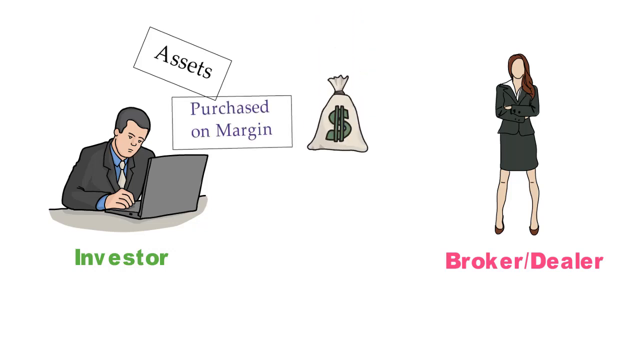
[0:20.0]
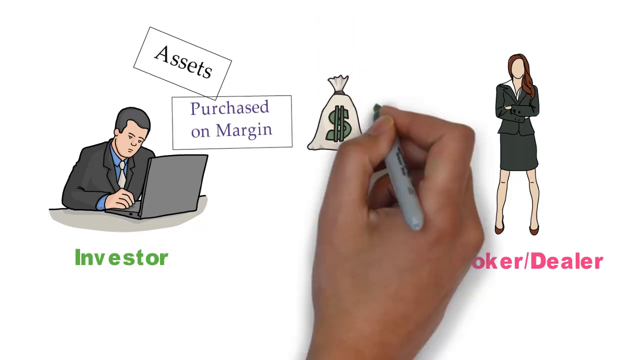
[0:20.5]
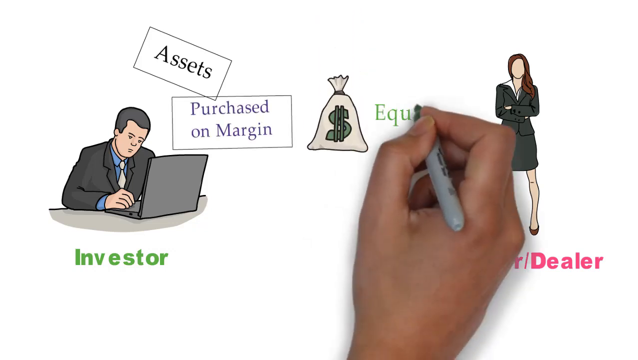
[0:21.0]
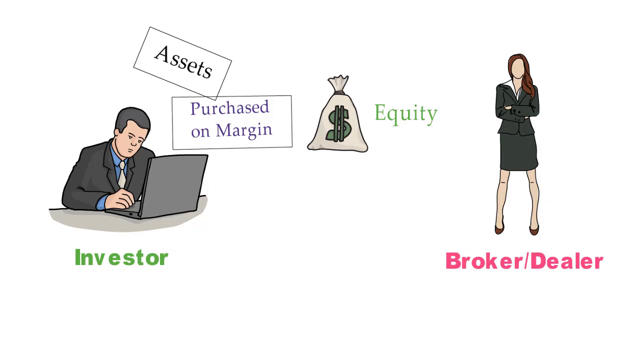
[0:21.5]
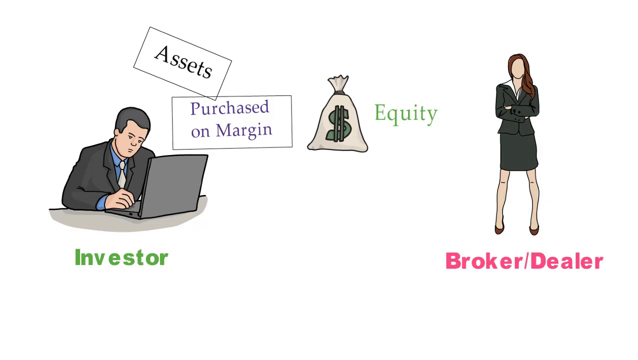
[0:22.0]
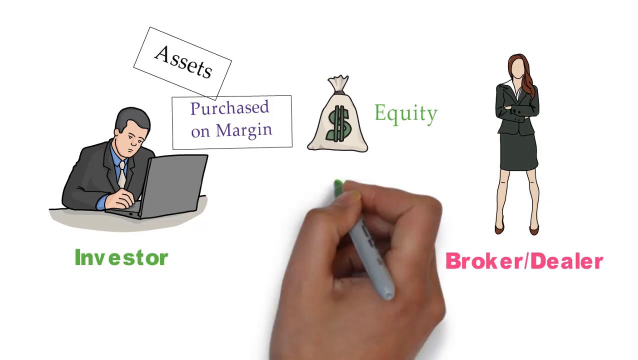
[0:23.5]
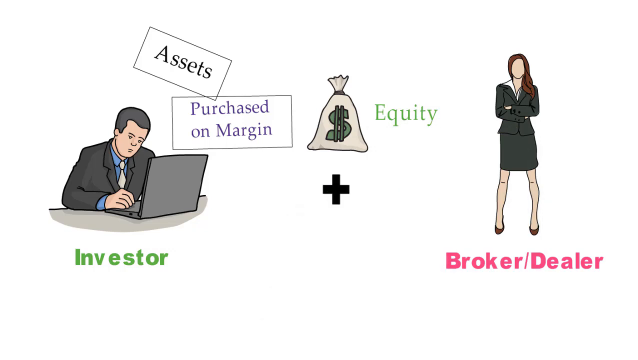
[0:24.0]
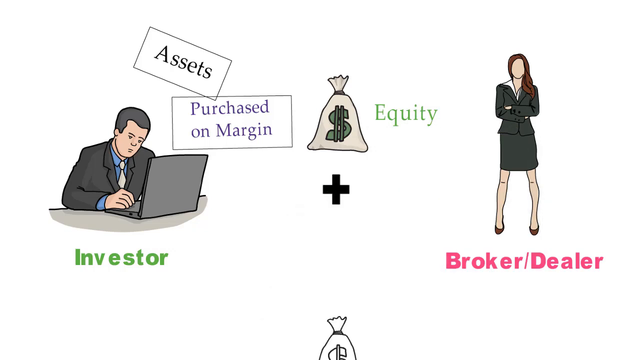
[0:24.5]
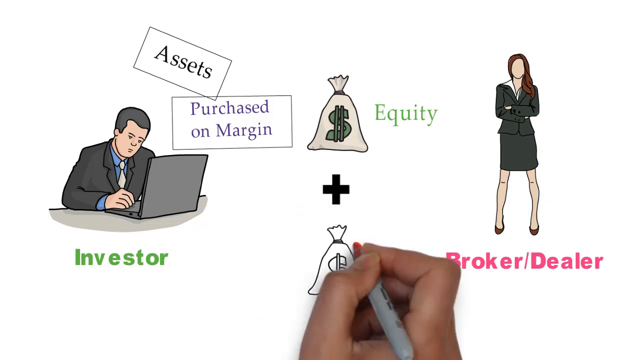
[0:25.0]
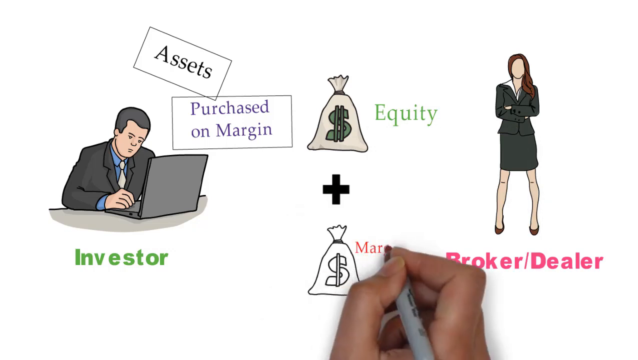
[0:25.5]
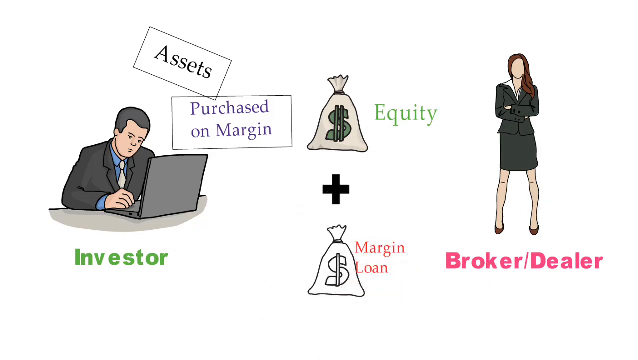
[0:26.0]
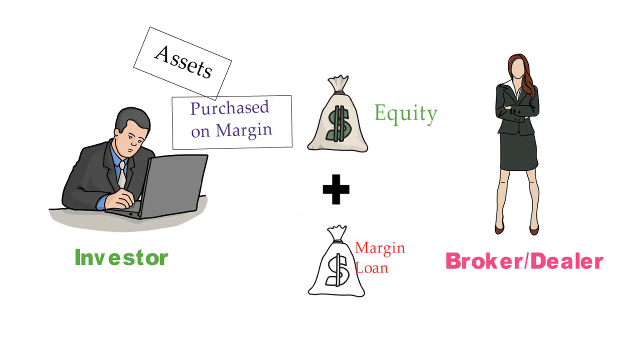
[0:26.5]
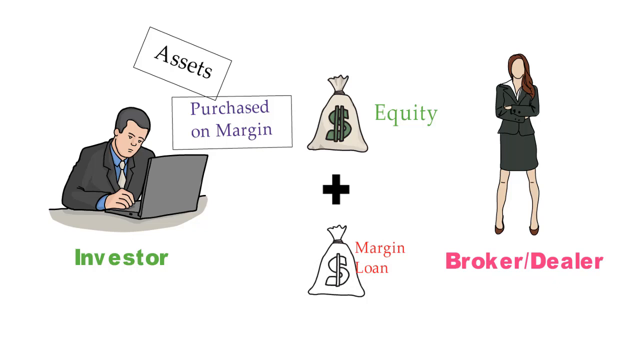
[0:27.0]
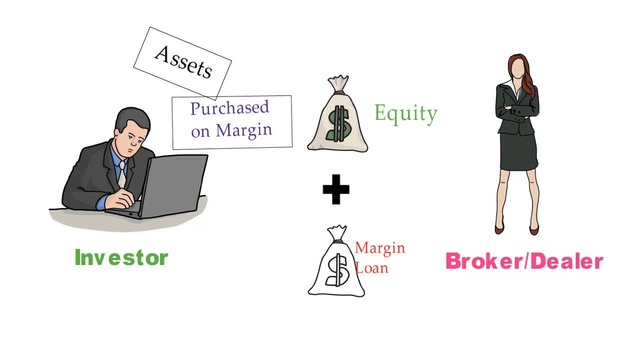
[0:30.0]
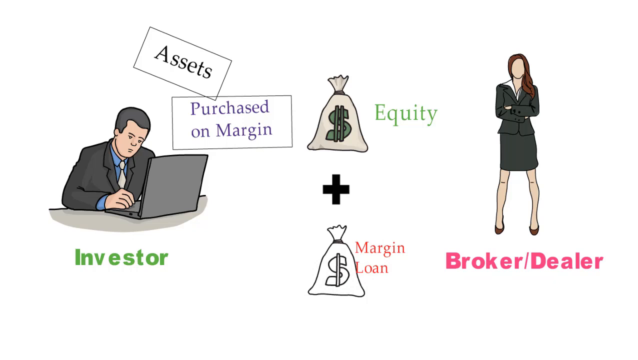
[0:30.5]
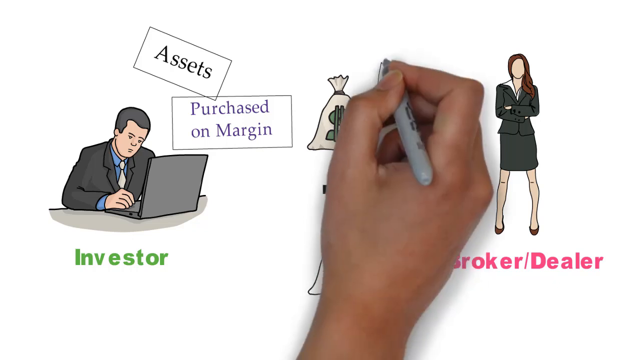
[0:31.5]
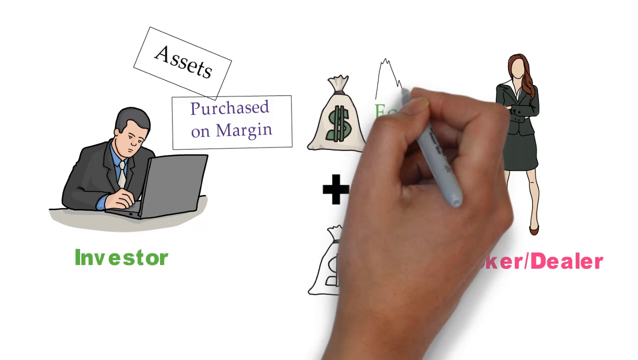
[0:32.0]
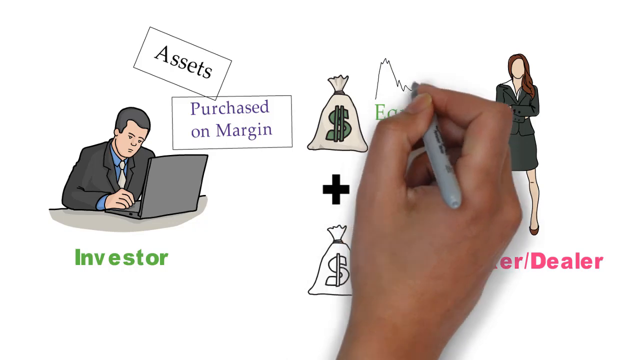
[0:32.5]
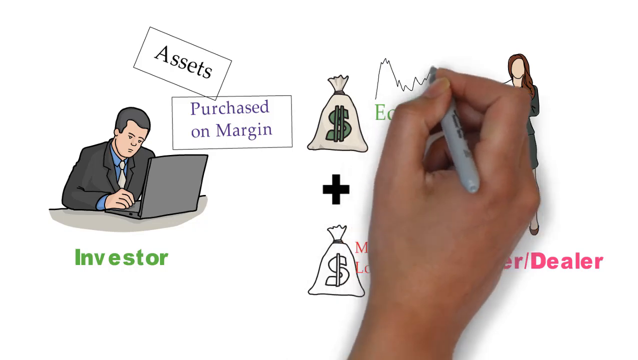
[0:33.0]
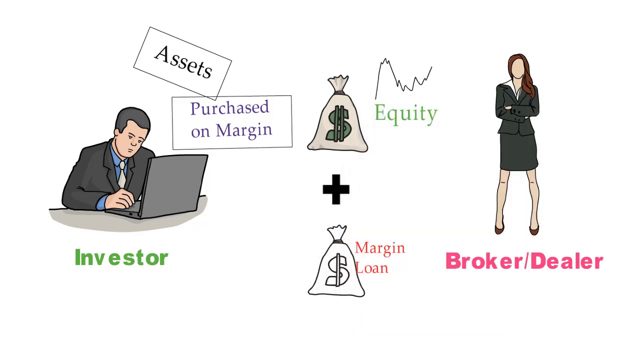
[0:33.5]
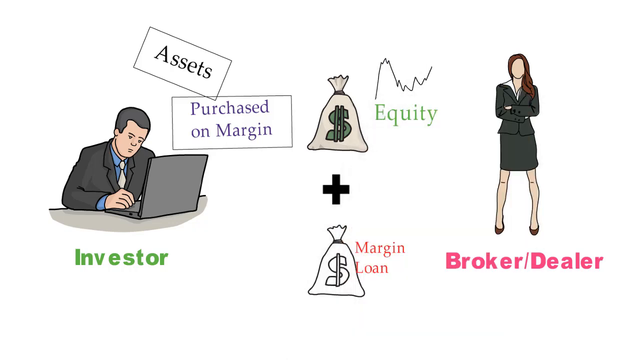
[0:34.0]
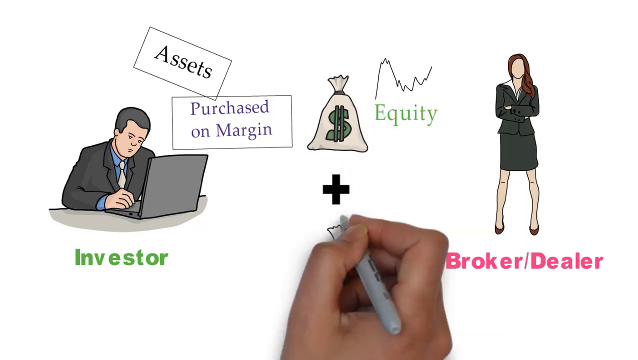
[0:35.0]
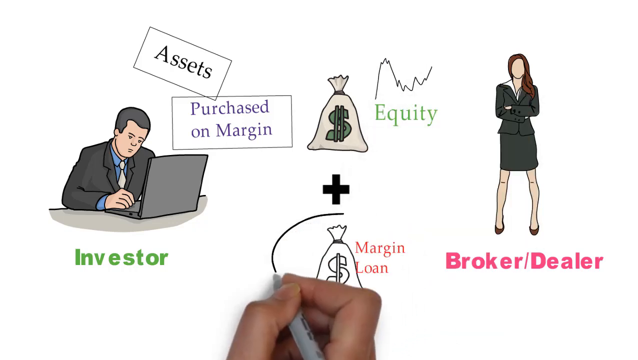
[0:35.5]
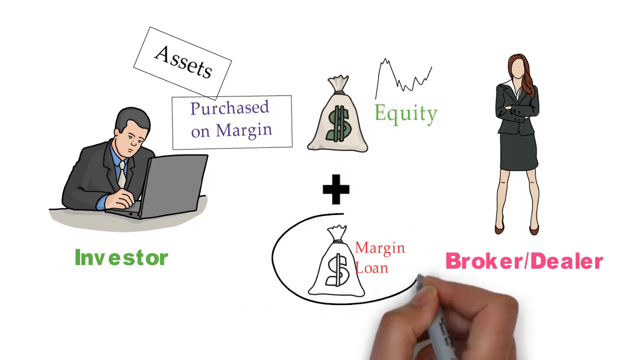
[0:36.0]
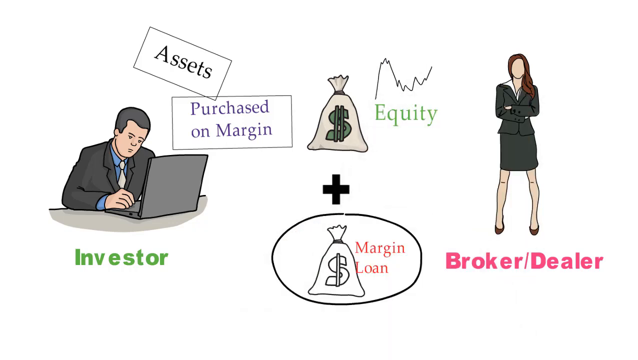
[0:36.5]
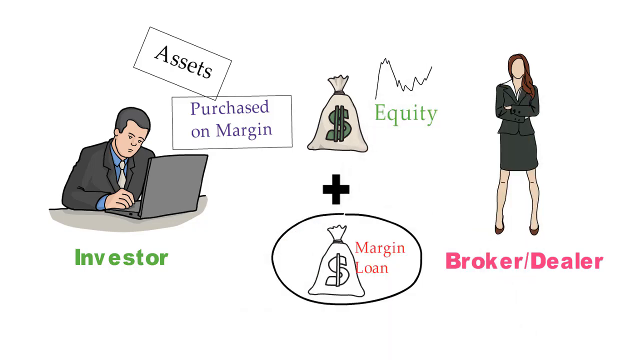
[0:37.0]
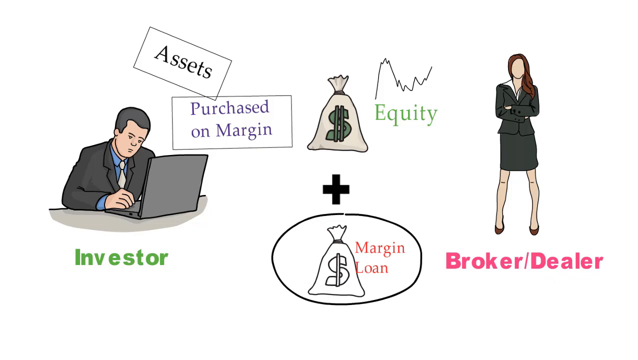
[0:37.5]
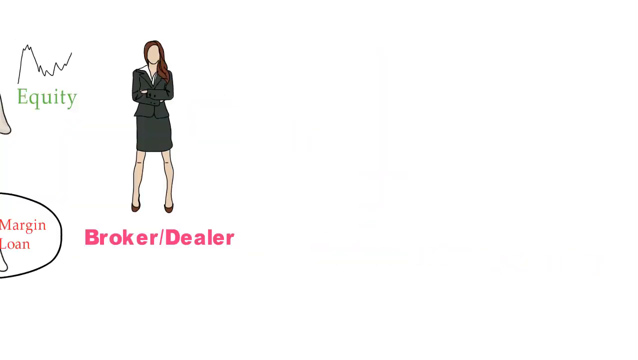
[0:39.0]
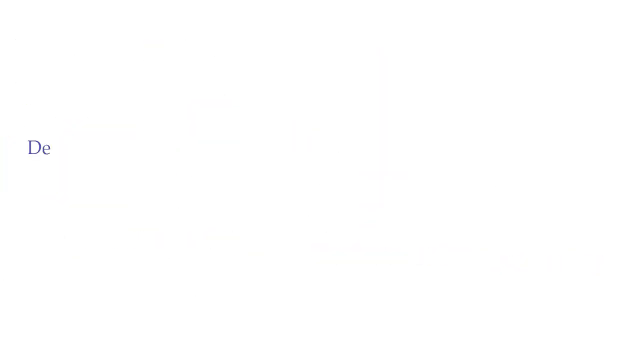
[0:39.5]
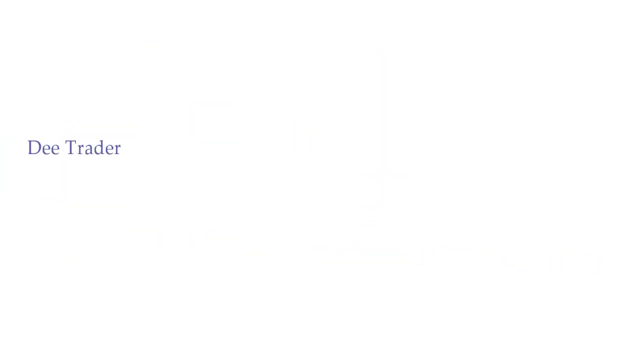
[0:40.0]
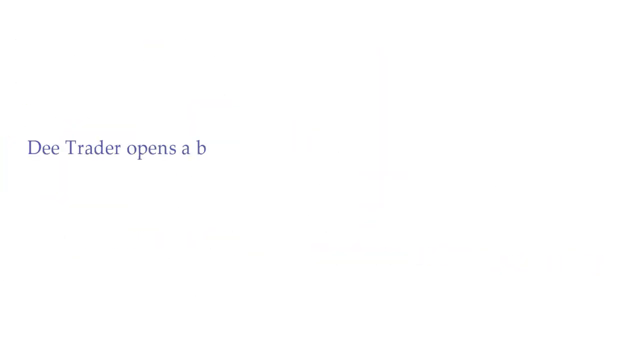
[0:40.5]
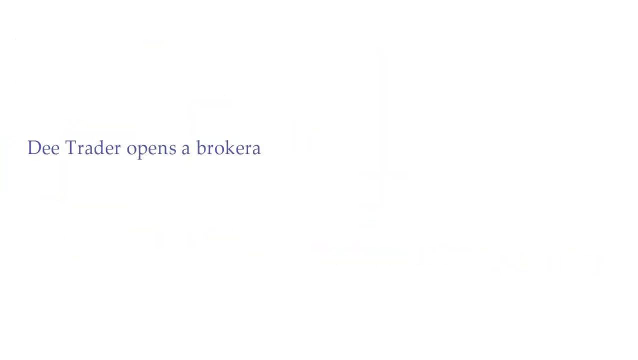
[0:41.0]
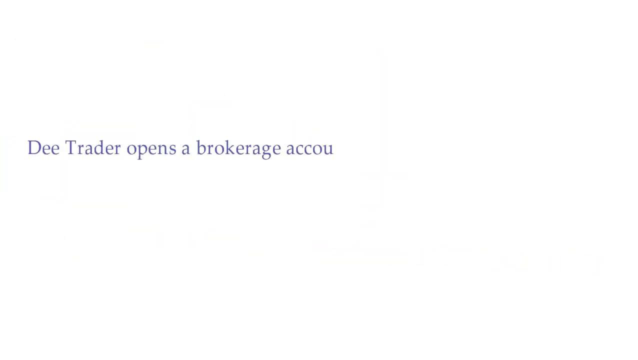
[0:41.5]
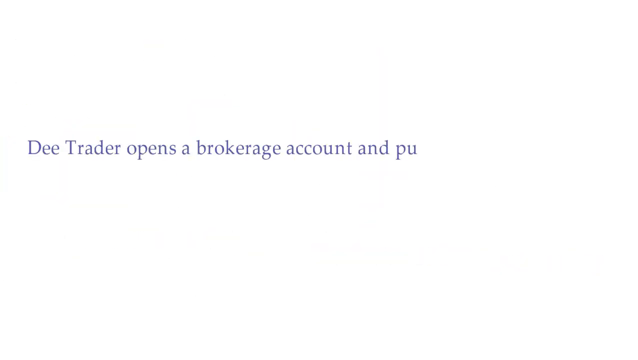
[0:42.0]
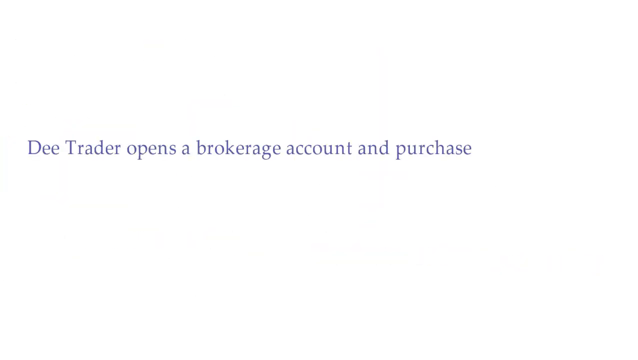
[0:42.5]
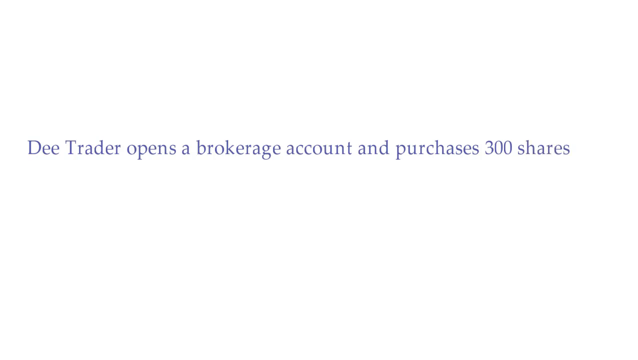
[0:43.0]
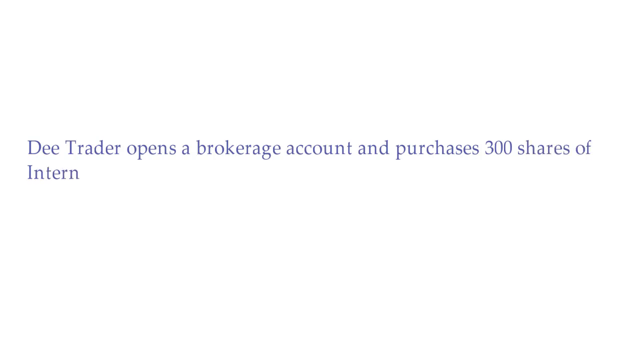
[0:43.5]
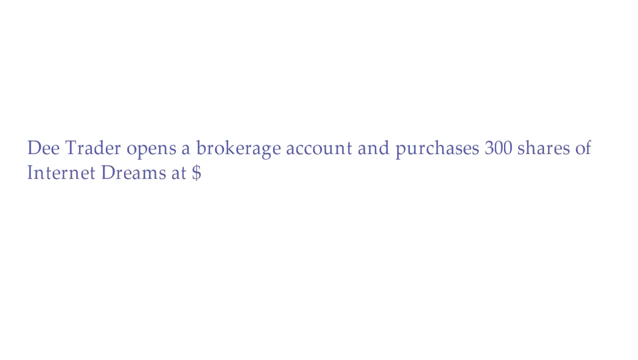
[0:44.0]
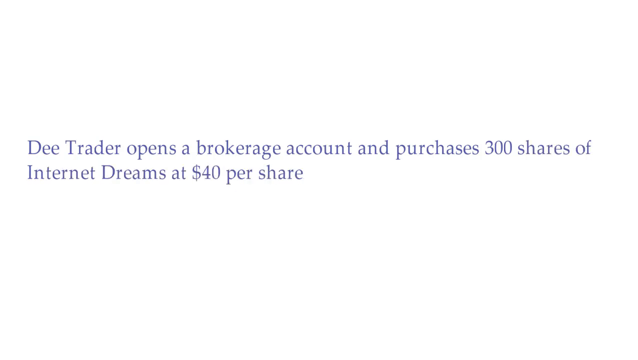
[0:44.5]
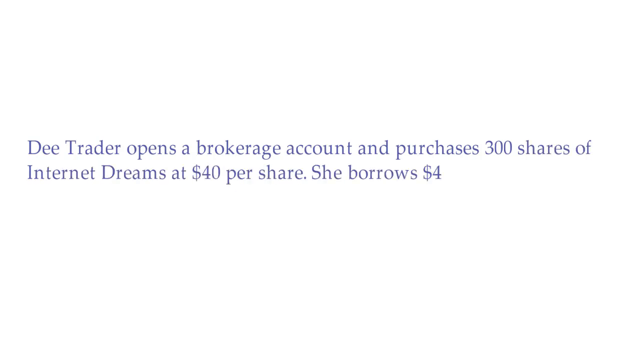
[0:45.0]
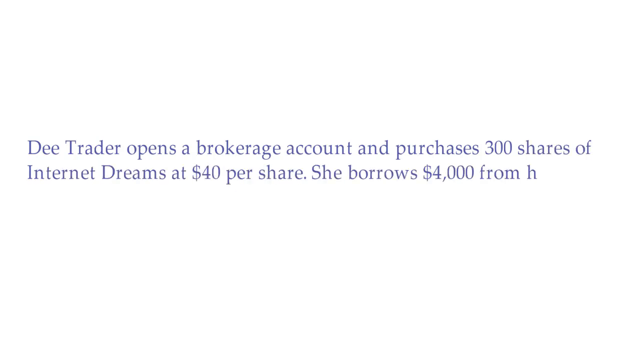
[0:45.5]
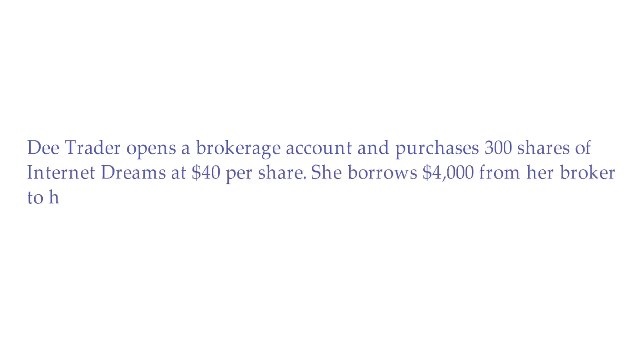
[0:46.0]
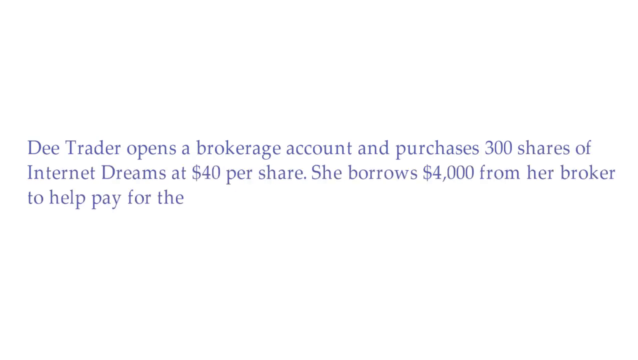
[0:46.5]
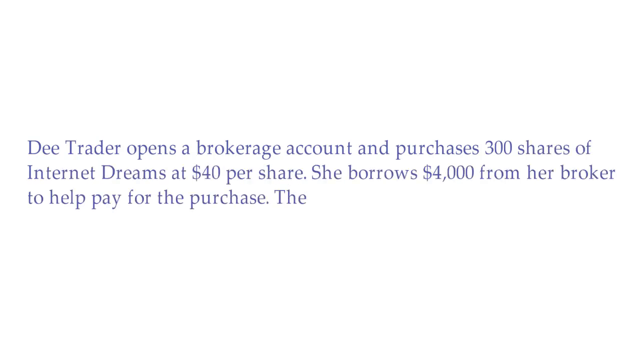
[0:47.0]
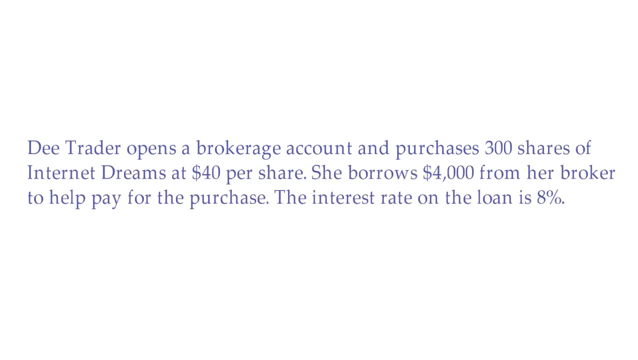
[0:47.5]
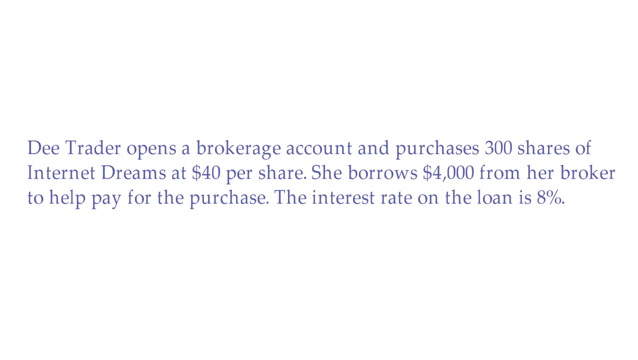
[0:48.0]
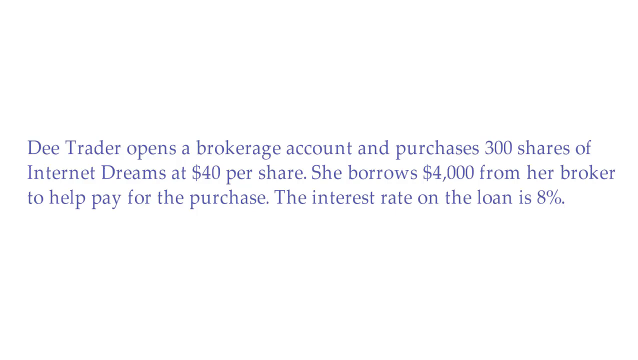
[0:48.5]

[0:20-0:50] The focus returns to the animated man on the left labeled the investor. Right above him, two boxes appear: the first contains the word "Assets" written in black, and the box immediately underneath is labeled "Purchased on margin" in blue. The Sharpie hand comes back to write the word "equity" beside the money bag, and then another money bag comes up from the bottom of the screen, labeled "margin loan" in red. This money bag is just black and white. The Sharpie hand goes up to the top and makes a squiggly line representing a graph above equity, then comes back down and draws a circle around the bottom money bag. The video moves to another screen that states: "Dee Trader opens a brokerage account and purchases 300 shares of Internet Dreams at $40 per share. She borrows $4,000 from her broker to help her pay for the purchase. The interest rate on the loan is 8%."